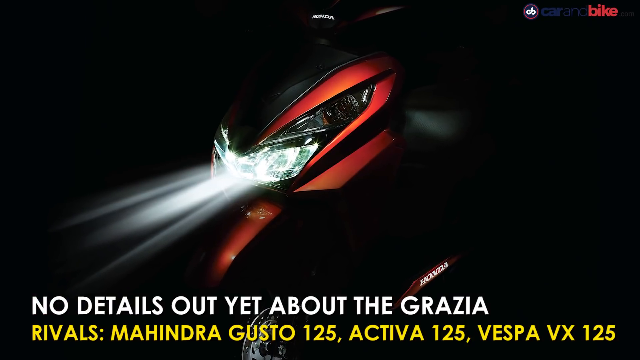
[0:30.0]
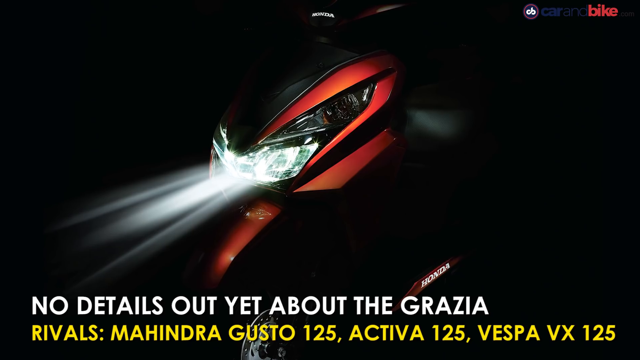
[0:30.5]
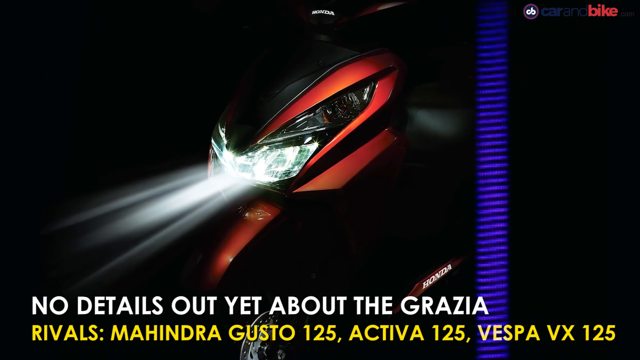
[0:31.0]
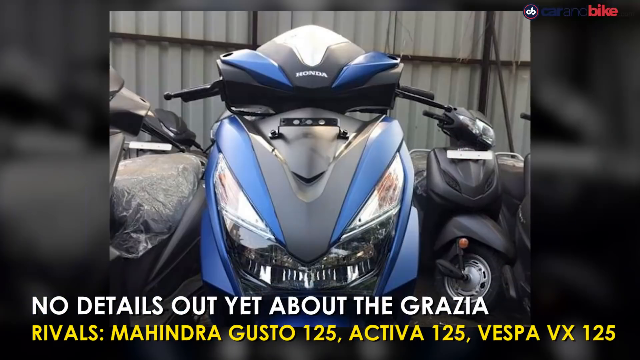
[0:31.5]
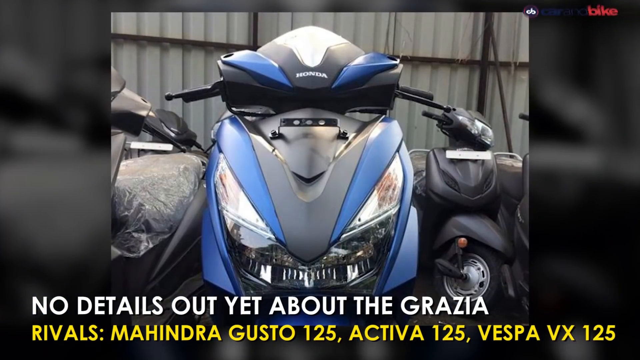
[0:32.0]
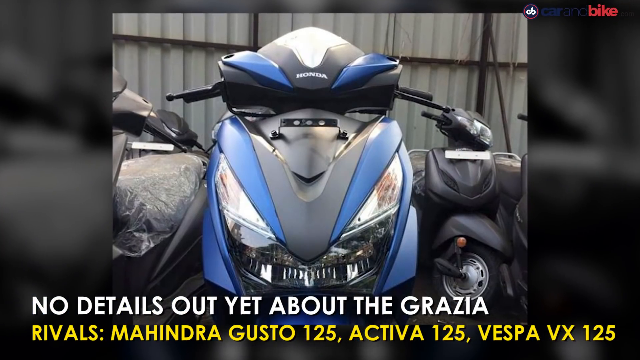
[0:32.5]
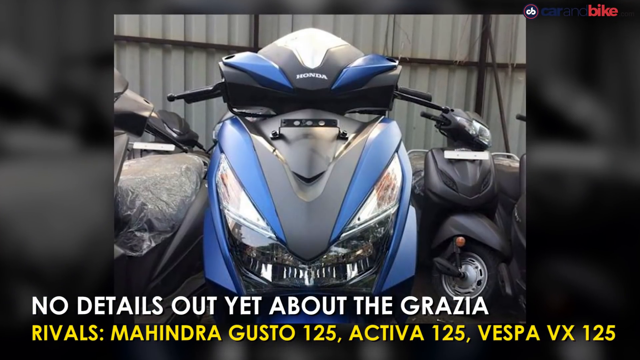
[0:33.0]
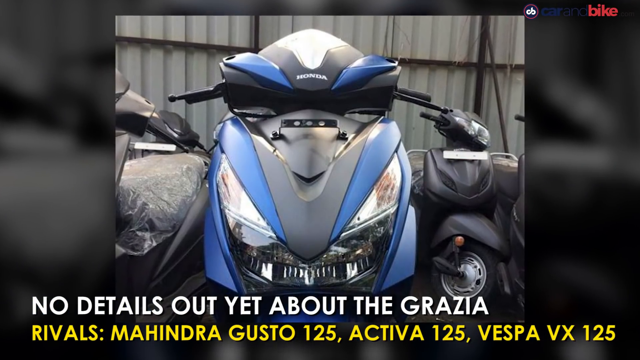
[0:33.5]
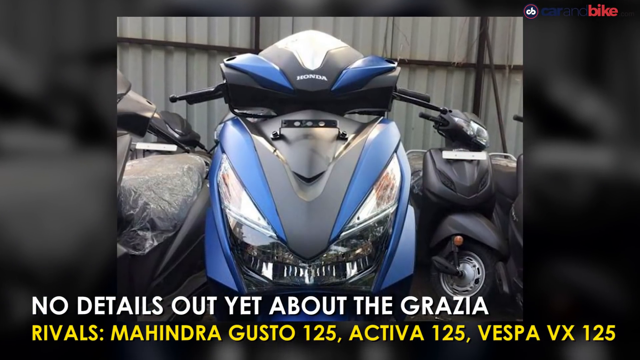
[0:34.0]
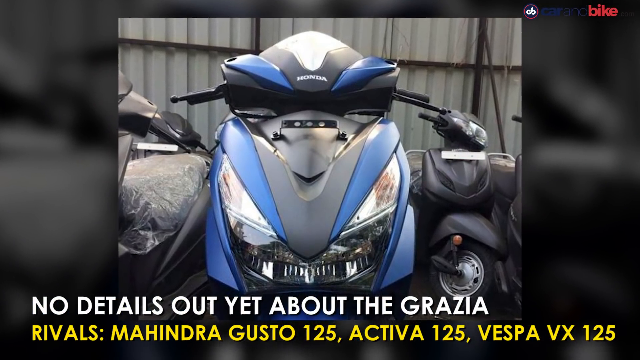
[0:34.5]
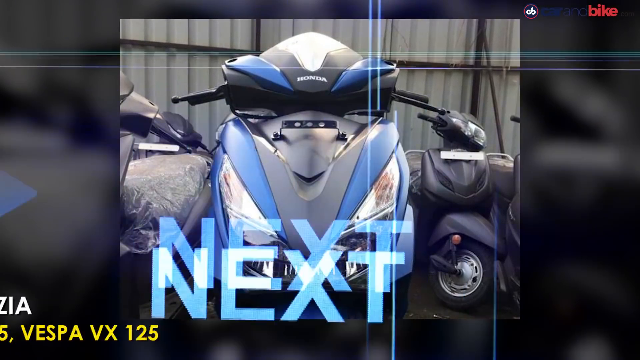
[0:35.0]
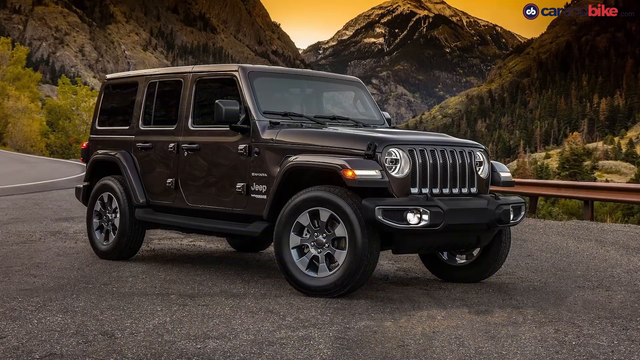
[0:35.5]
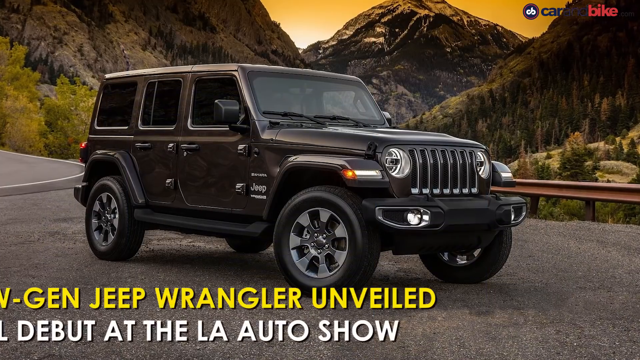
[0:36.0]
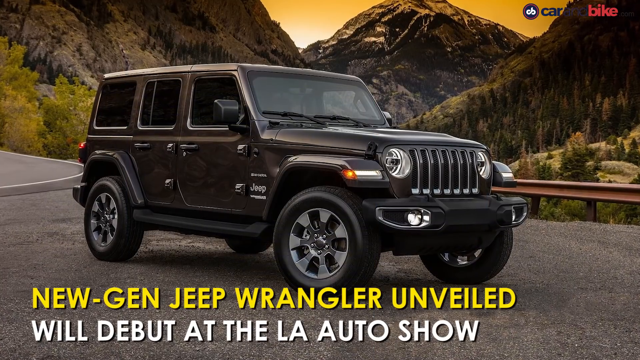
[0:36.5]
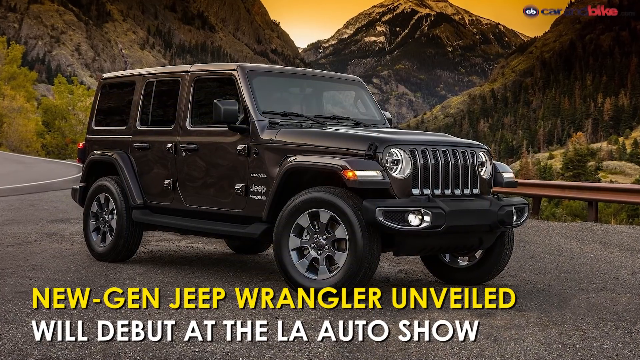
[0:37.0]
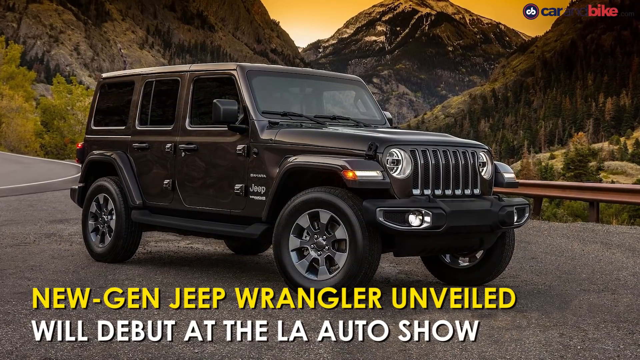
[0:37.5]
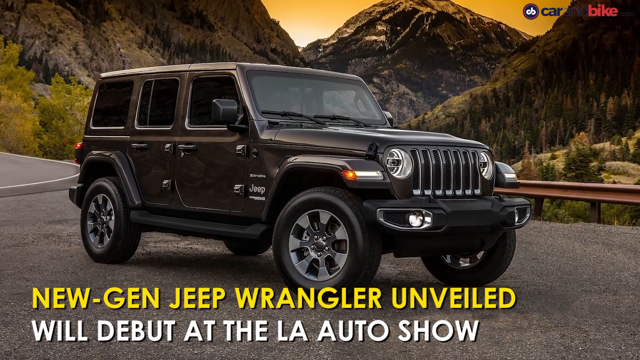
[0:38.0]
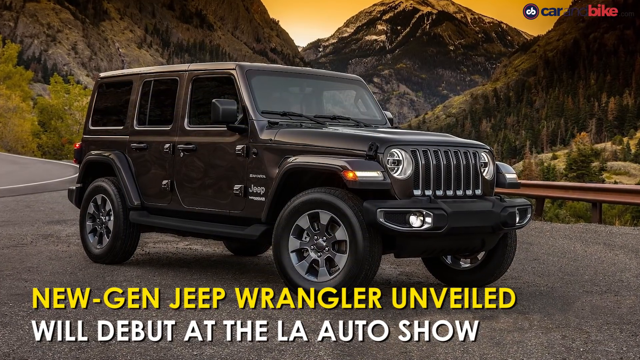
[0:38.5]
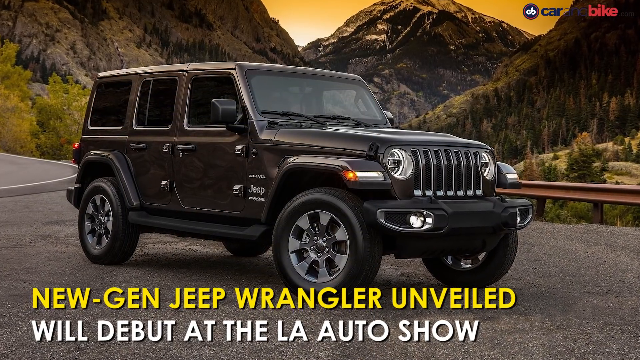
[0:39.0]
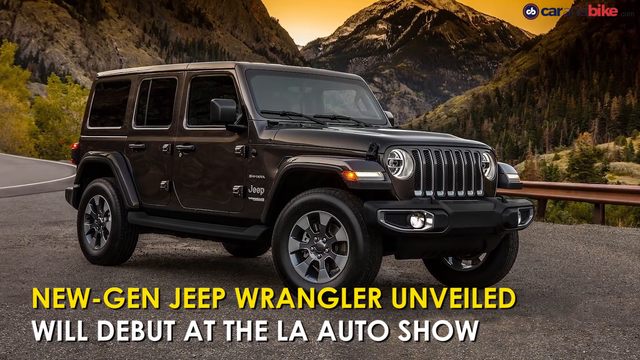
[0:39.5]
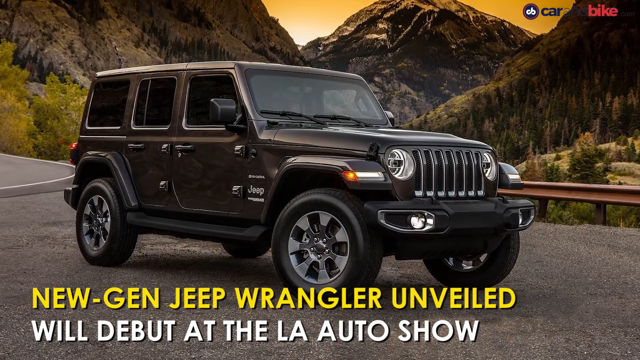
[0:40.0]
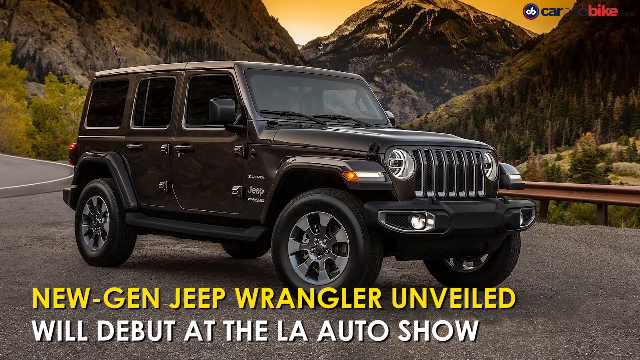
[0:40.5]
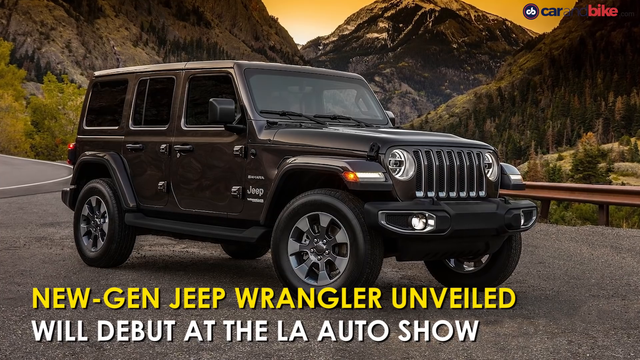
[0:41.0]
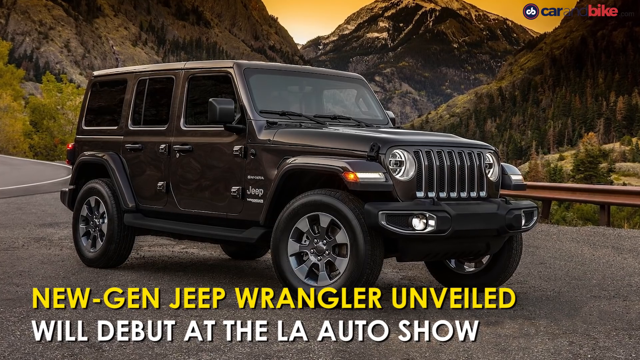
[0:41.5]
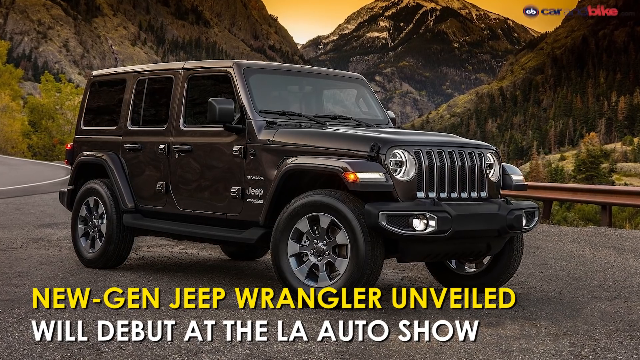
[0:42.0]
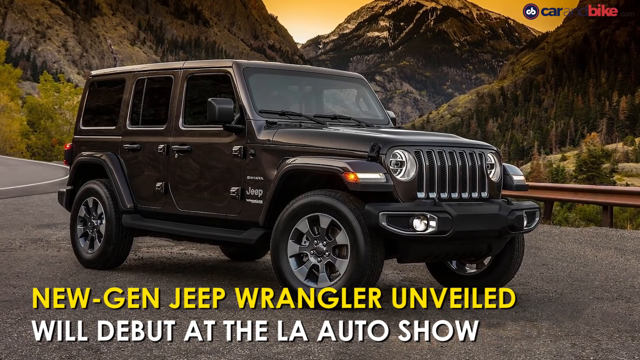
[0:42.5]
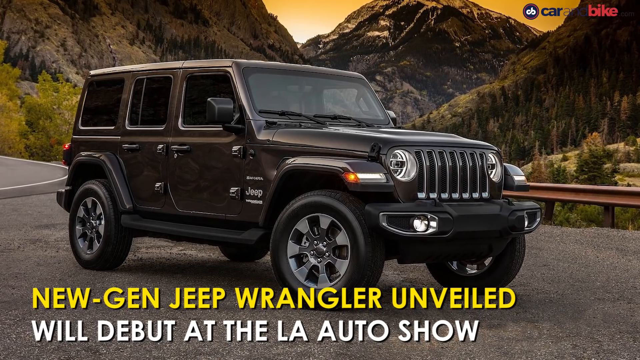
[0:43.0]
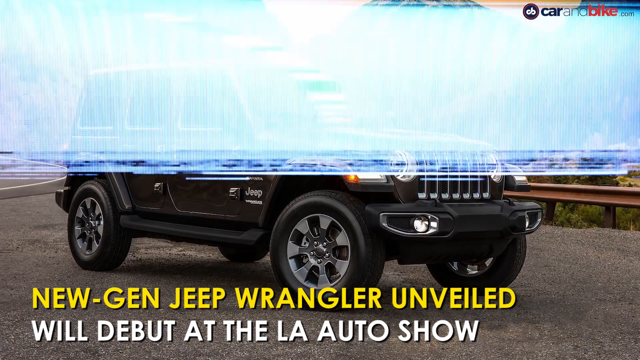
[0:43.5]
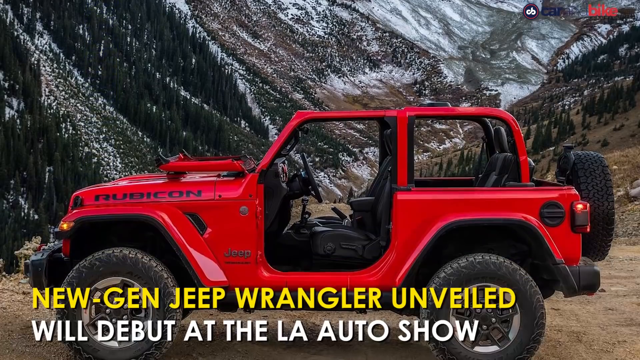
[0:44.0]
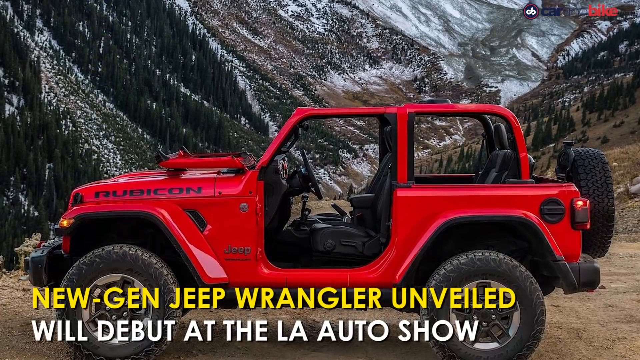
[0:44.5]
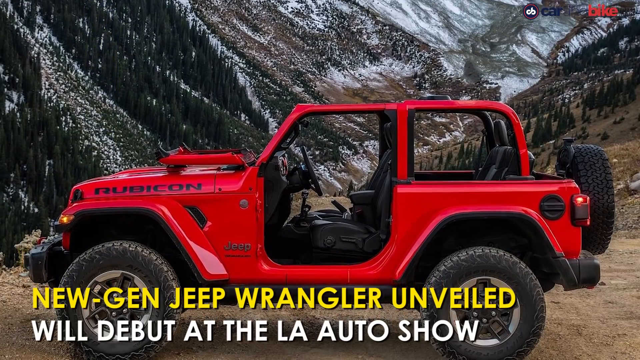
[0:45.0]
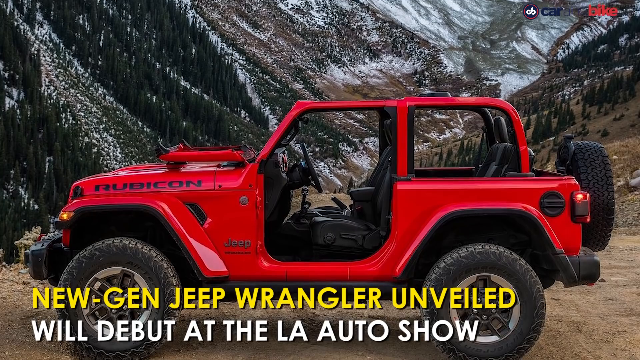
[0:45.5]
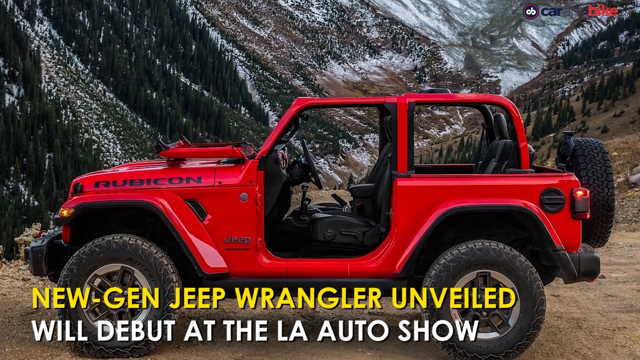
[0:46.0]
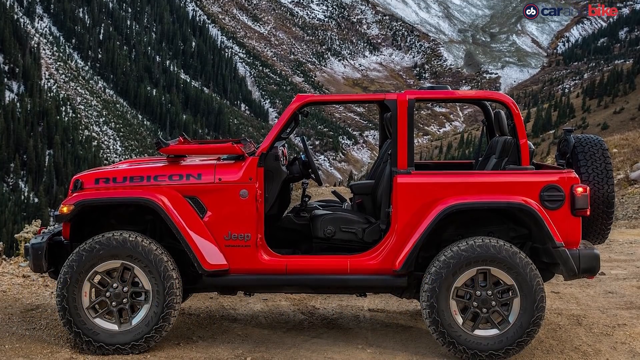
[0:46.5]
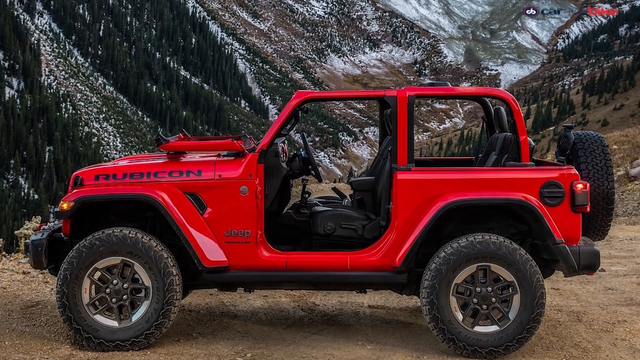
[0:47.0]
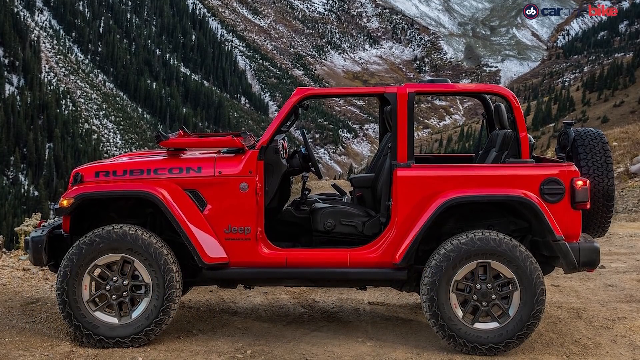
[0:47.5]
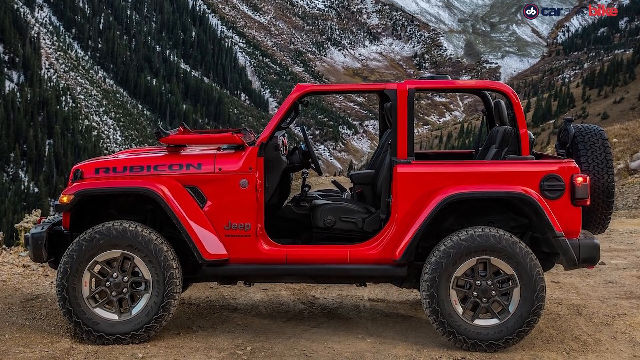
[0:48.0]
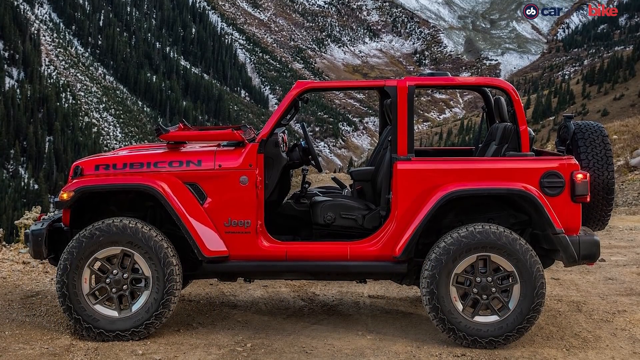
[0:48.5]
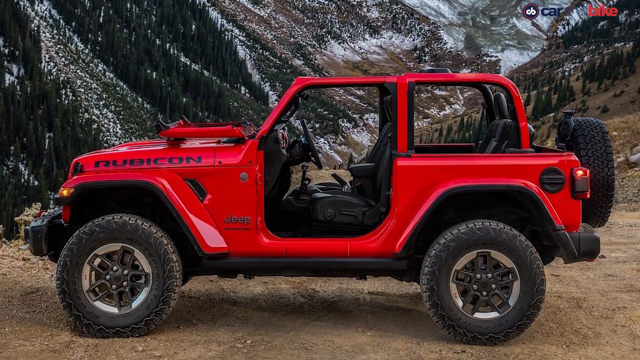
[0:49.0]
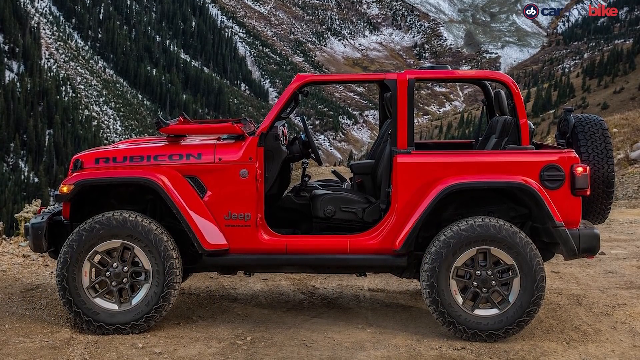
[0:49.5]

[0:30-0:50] The video moves on to stock photos of a Jeep Wrangler from the manufacturer's website. There are no moving images, only stock photos with edited zooming and panning added. It looks like either a YouTube news video about upcoming vehicle releases or possibly an Instagram or TikTok reel. The Jeep is center screen in a polished, edited promotional photo from the manufacturer. The second photo is similar, showing different features of the vehicle. Fairly low-quality video cuts appear between the photos. Text along the bottom of the screen explains what is being shown, stating that a new Jeep Wrangler will be debuting at the LA Auto Show, giving it the look of short-format news.